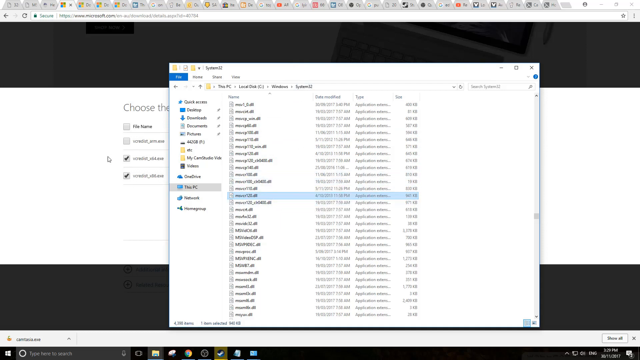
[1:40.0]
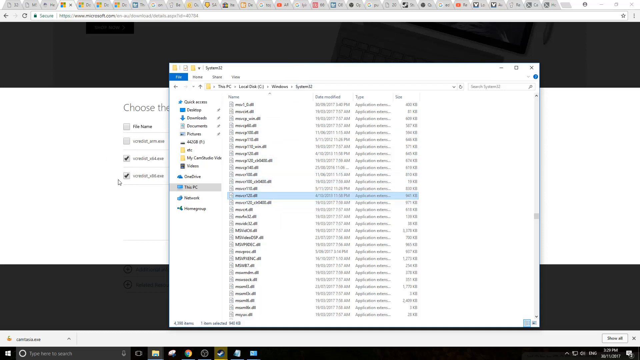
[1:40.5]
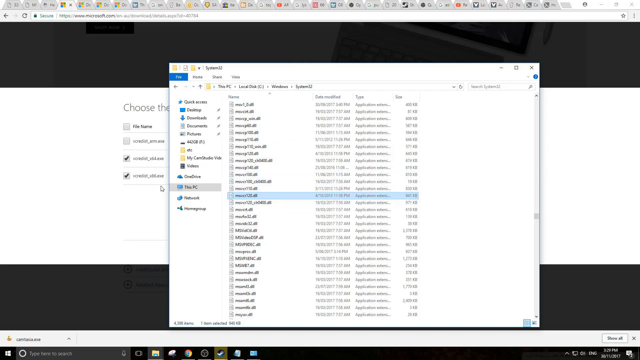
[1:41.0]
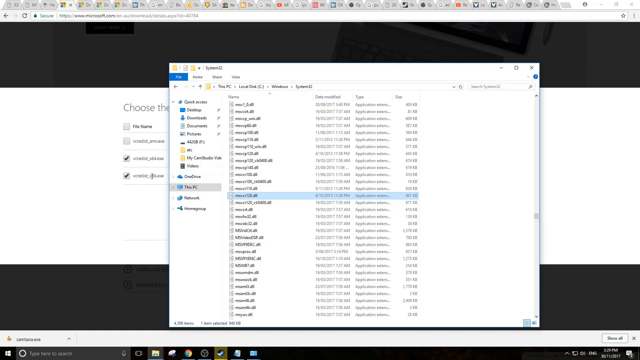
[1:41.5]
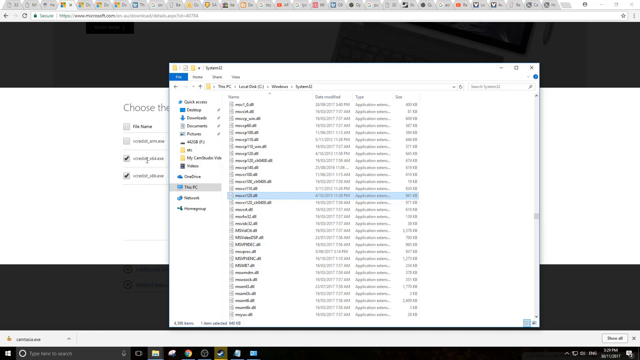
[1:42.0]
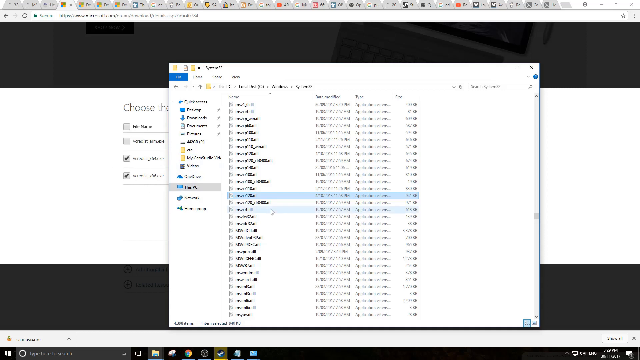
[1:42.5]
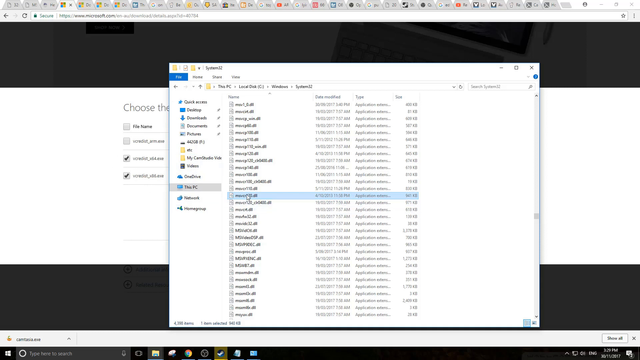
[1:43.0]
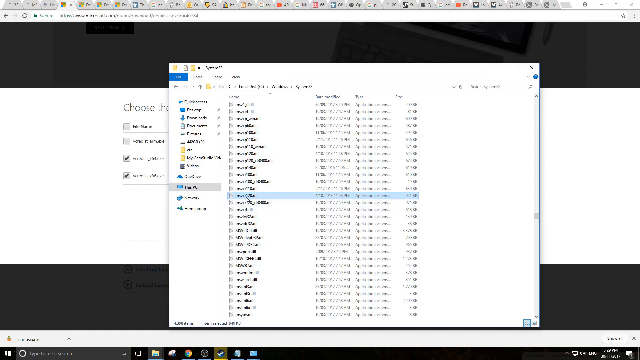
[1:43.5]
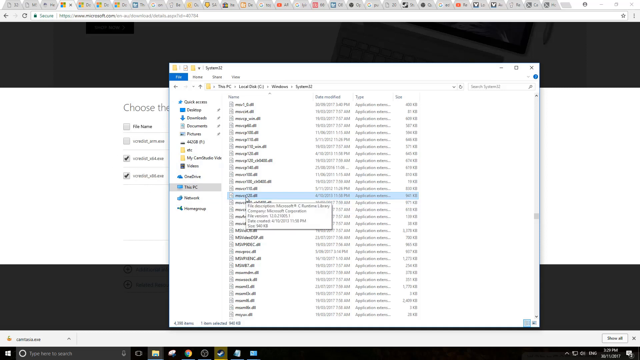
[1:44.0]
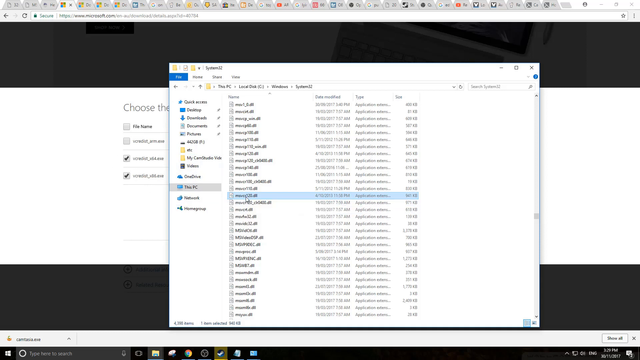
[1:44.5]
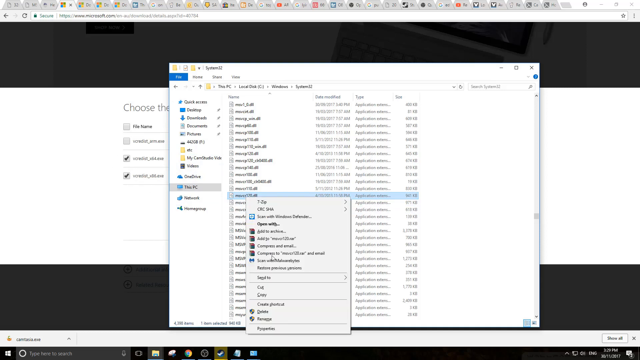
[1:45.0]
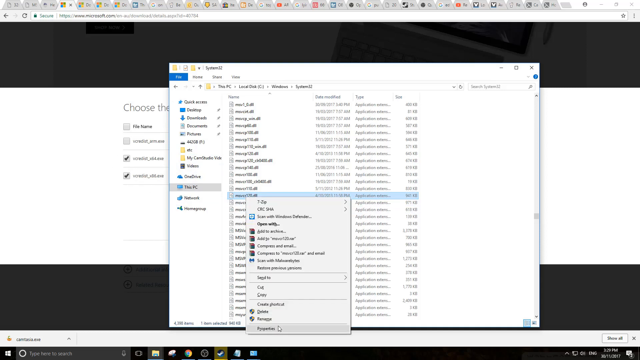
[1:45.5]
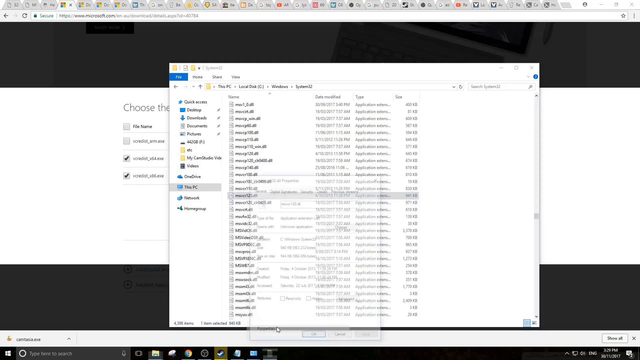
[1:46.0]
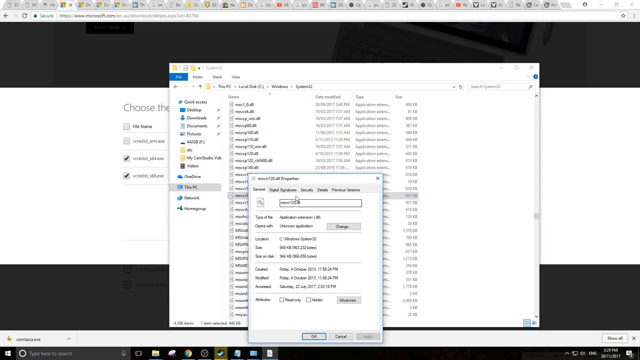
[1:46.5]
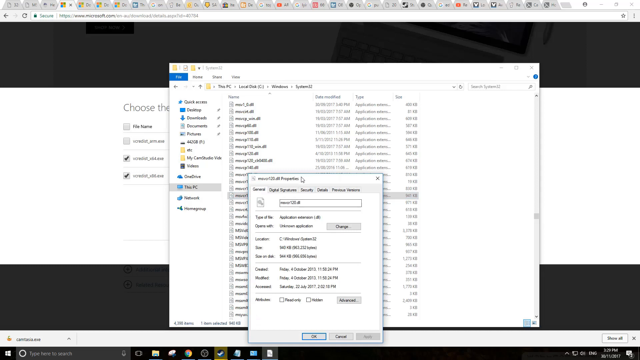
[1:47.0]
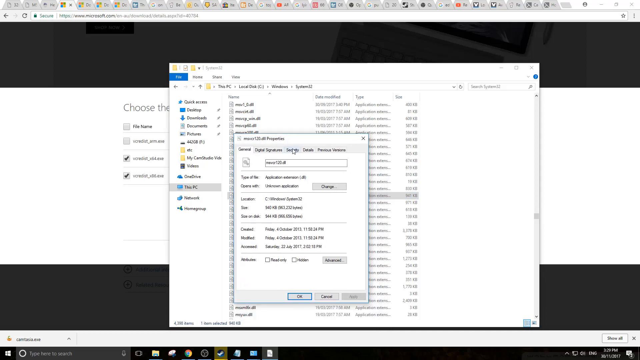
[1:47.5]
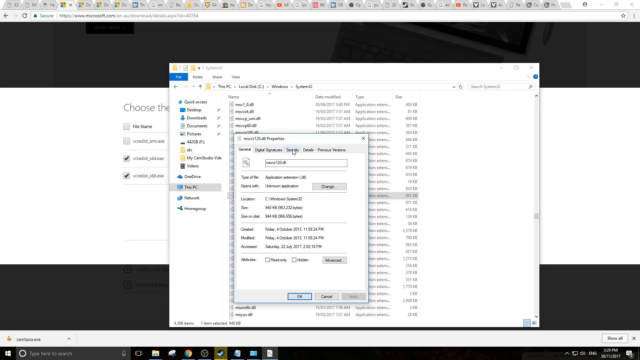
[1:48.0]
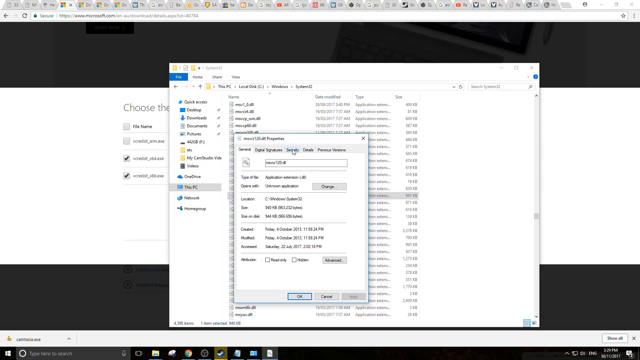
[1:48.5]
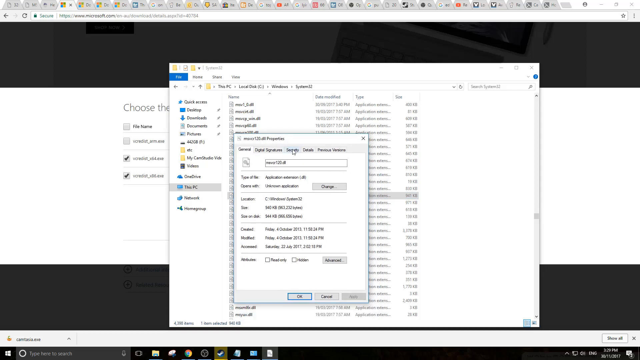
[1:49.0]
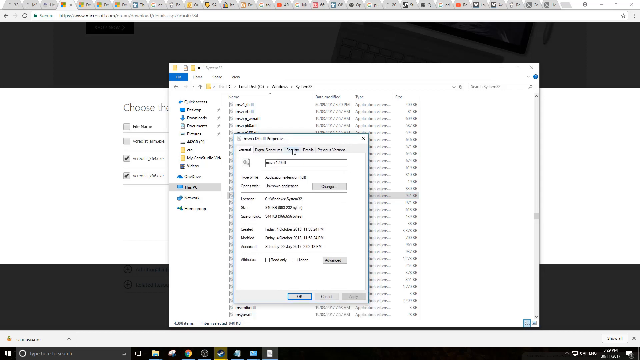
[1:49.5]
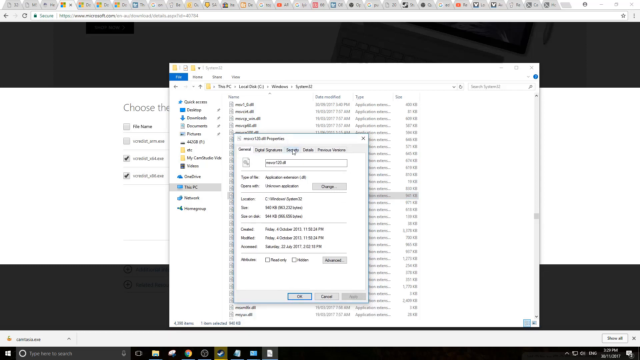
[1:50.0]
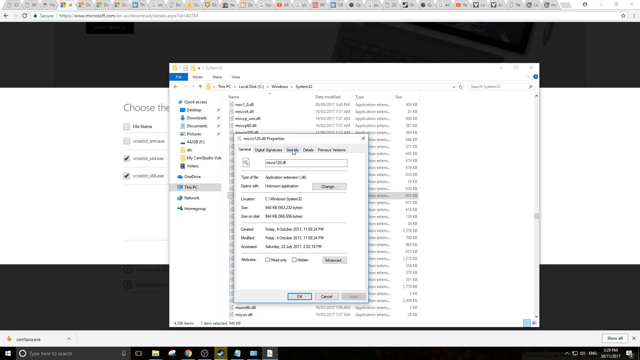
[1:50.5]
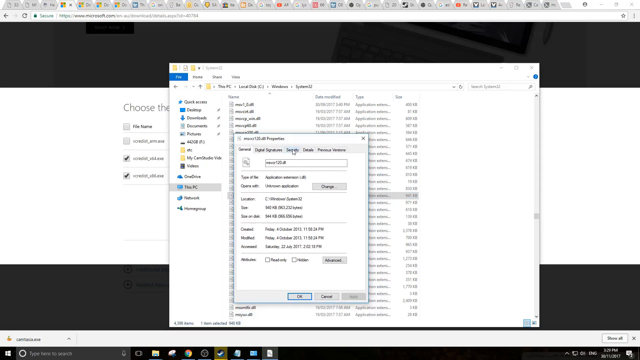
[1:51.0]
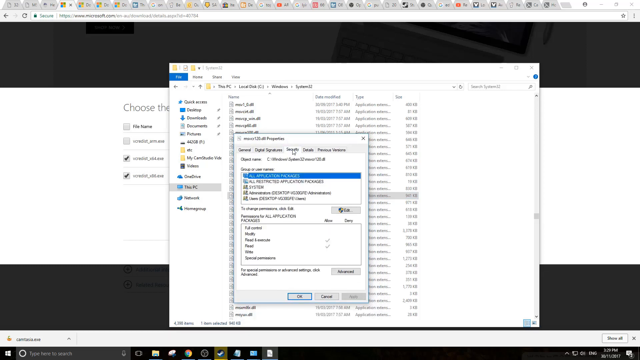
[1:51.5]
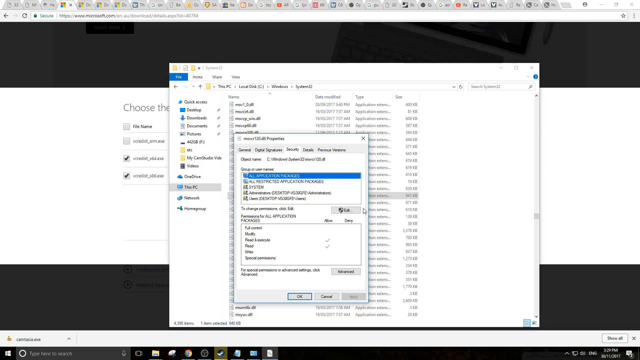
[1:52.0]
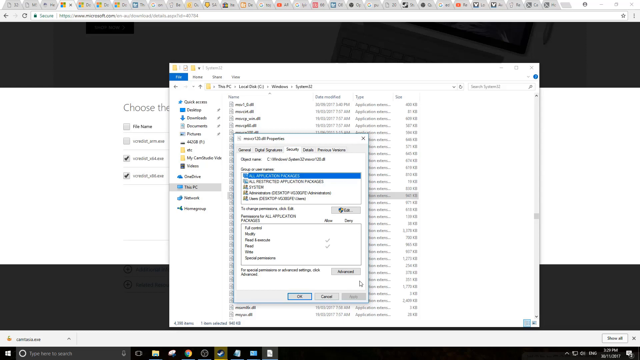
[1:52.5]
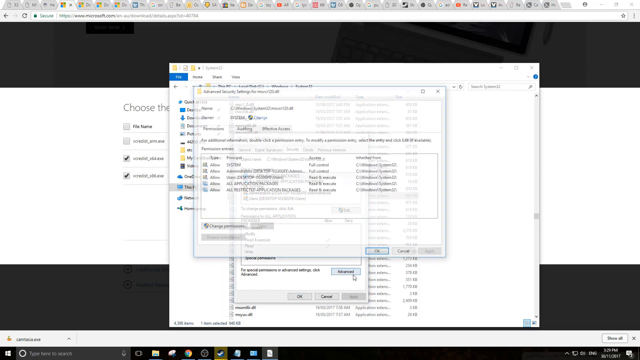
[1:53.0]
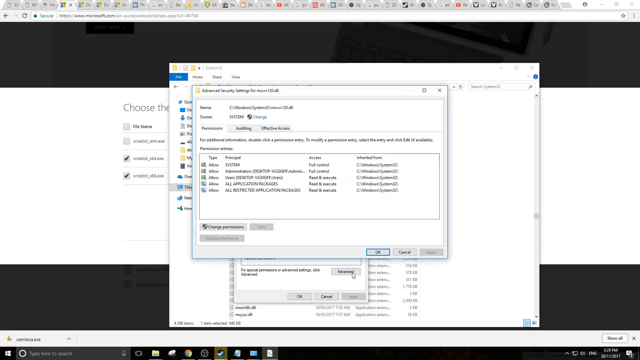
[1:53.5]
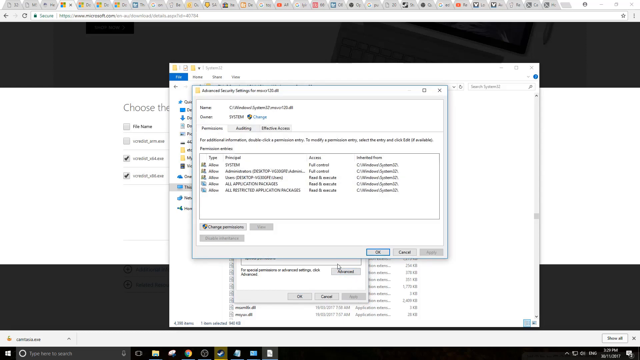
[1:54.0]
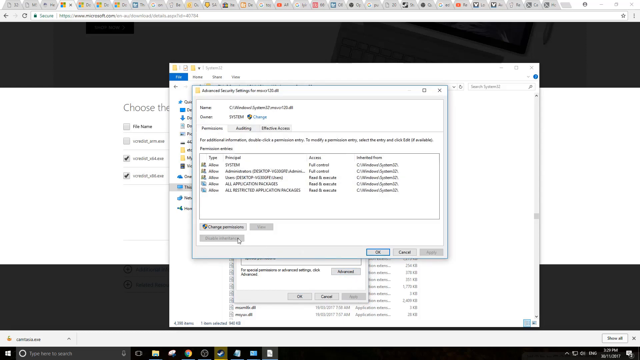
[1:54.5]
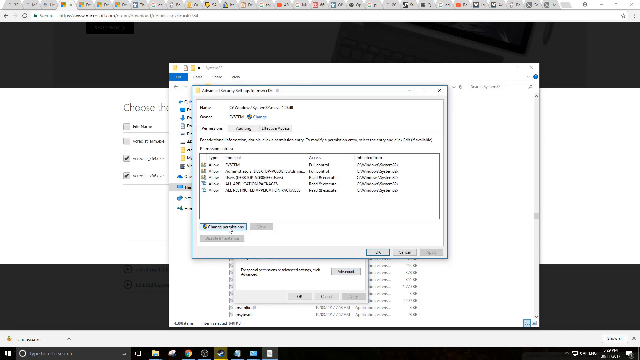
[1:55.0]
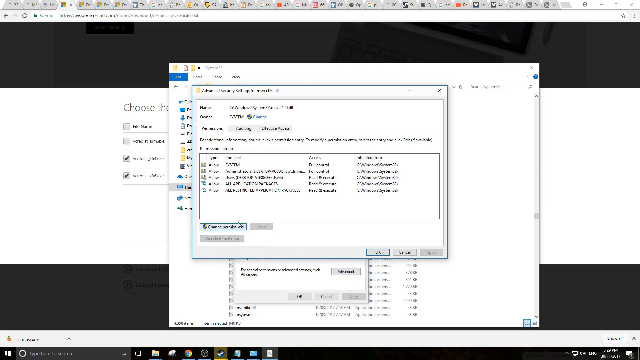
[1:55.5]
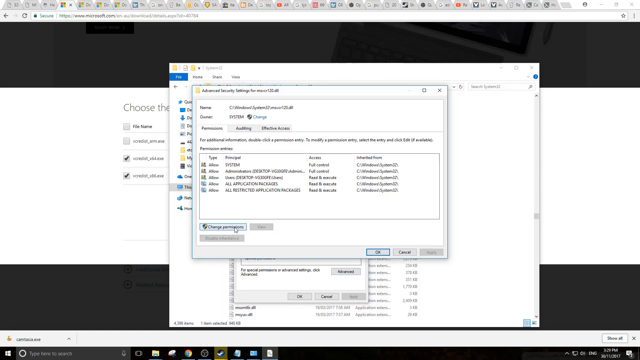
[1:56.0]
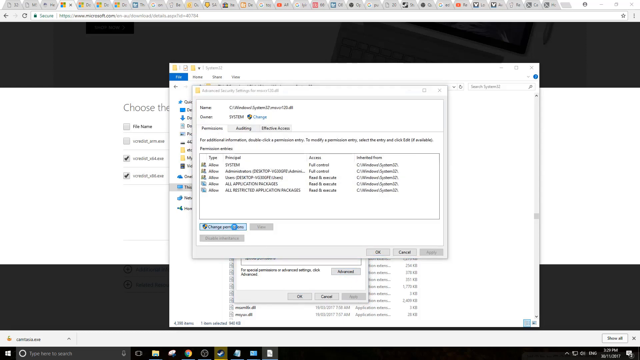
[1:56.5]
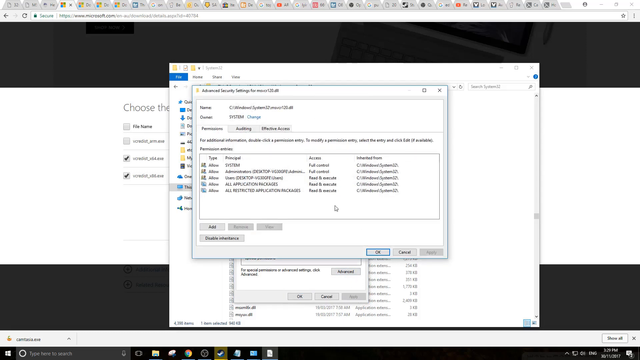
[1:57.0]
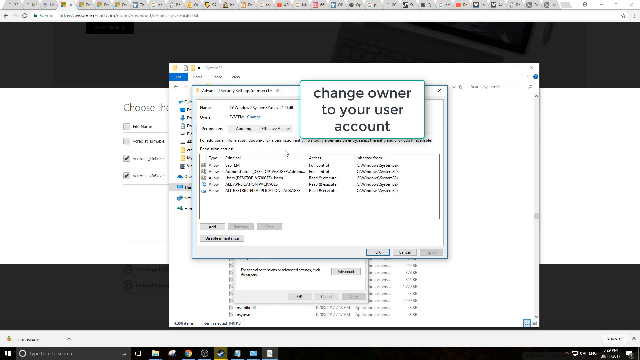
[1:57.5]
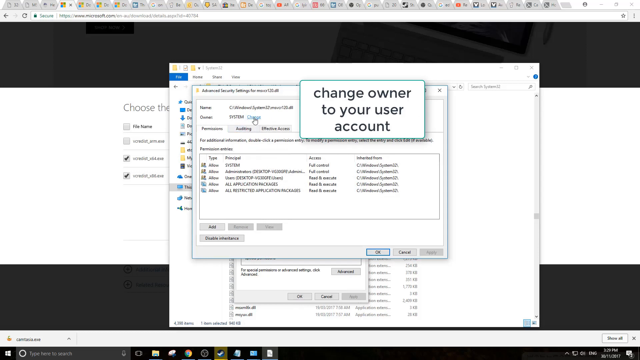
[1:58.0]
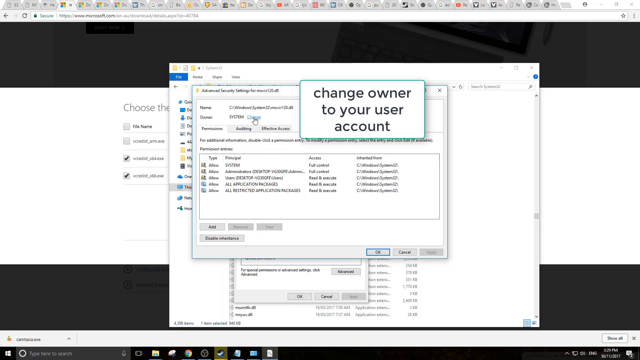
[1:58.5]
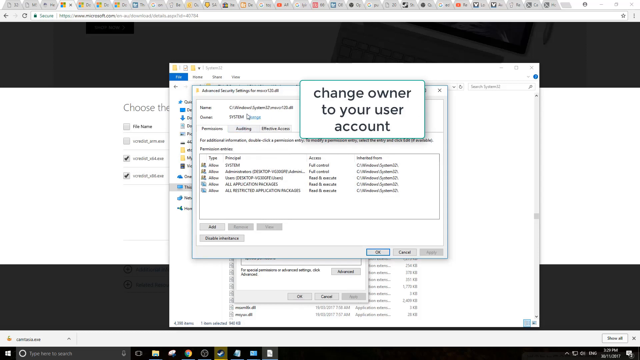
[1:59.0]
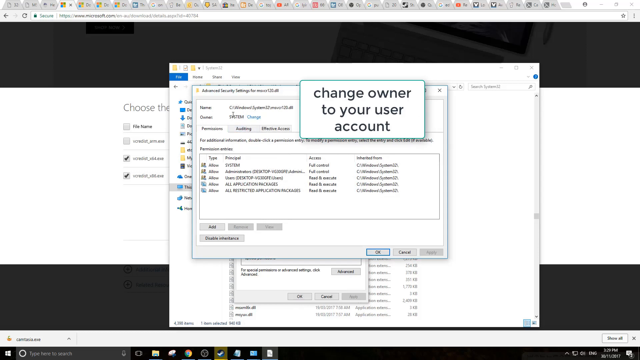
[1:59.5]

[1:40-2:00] The mouse hovers over the file highlighted in blue, and information about the file pops up. The user right-clicks to bring up menu options and clicks Properties, goes to the Security tab, the third tab along, and then to the advanced settings near the bottom of the box. The advanced settings box appears, and the user clicks change permissions, which brings up the permissions box. The user hovers the mouse over its top section. Annotated text appears in a text box with a turquoise border saying "change owner to your user account". The user then clicks a link in blue text near the top of the screen; the rest of the text is black.